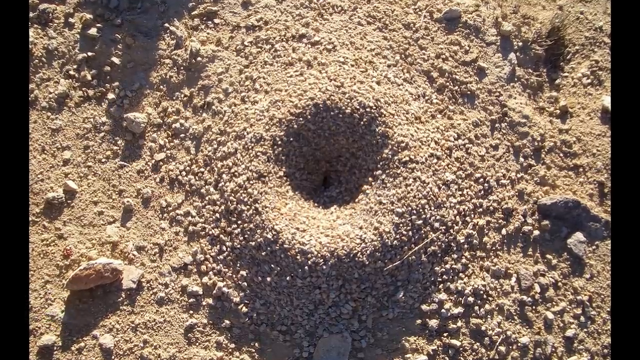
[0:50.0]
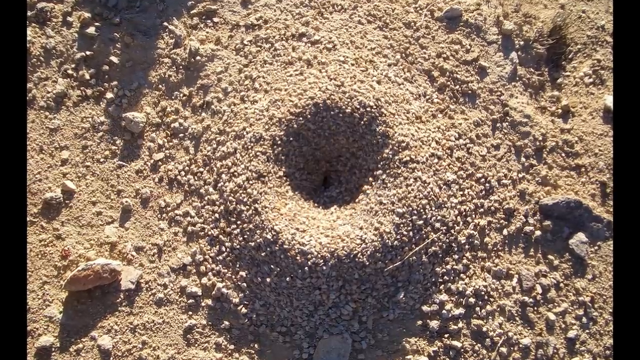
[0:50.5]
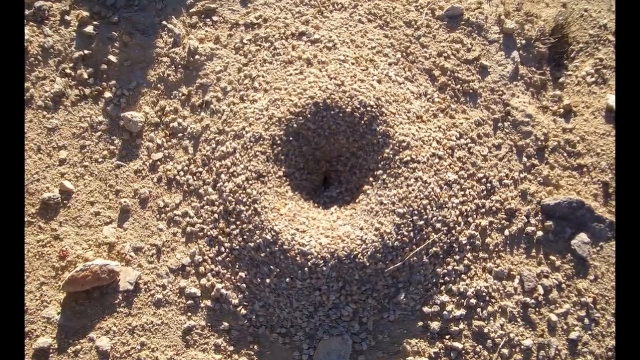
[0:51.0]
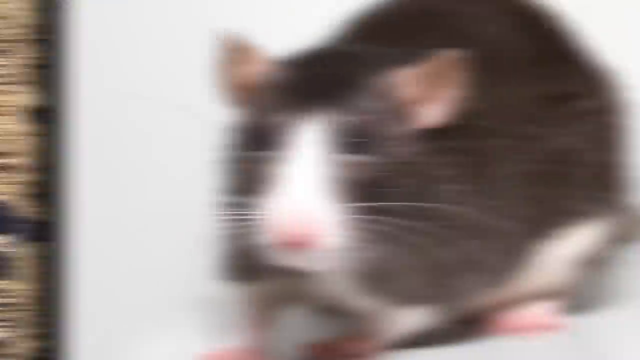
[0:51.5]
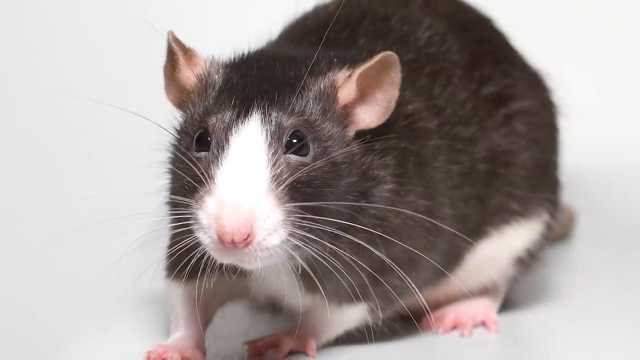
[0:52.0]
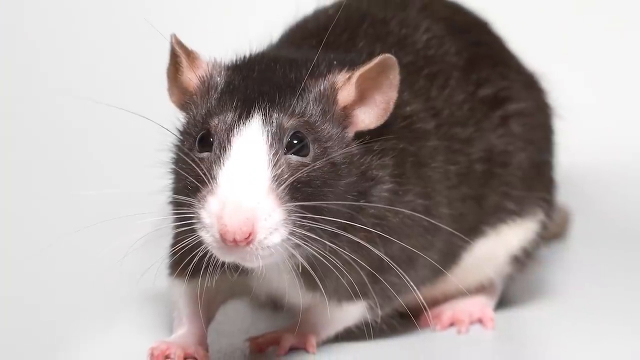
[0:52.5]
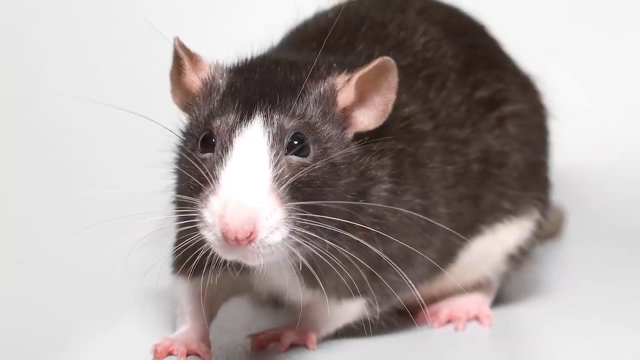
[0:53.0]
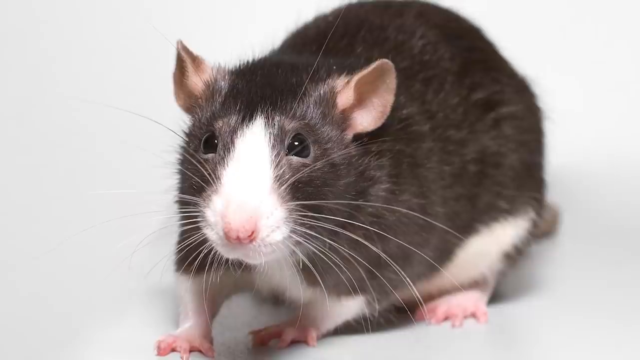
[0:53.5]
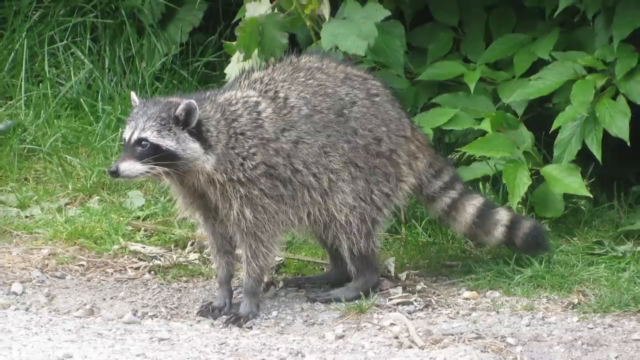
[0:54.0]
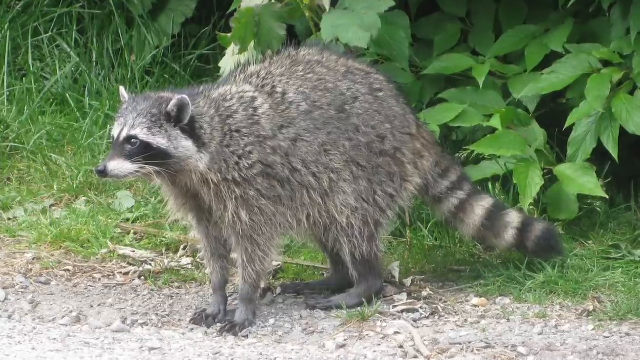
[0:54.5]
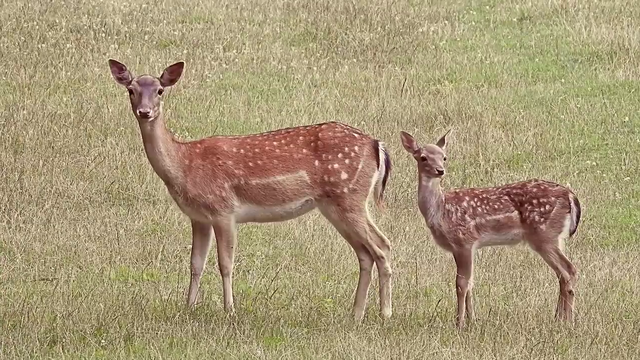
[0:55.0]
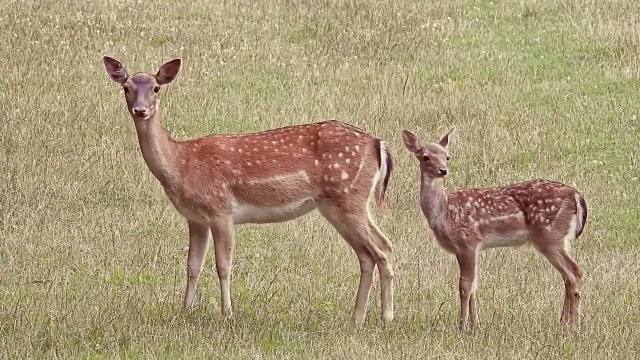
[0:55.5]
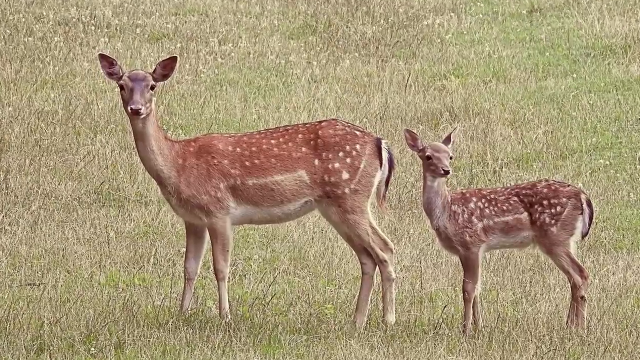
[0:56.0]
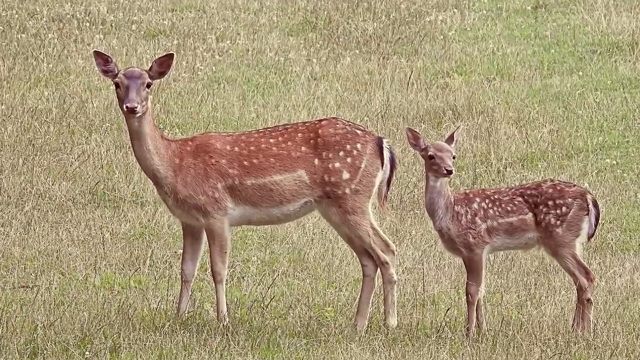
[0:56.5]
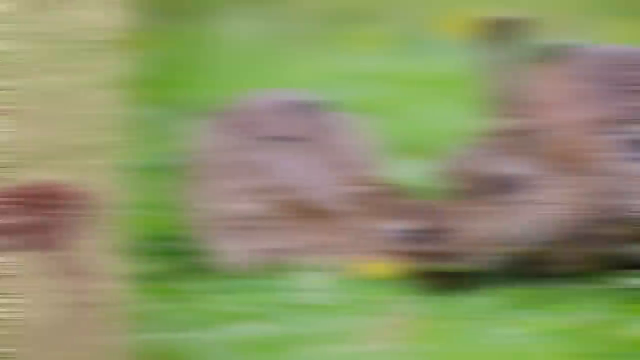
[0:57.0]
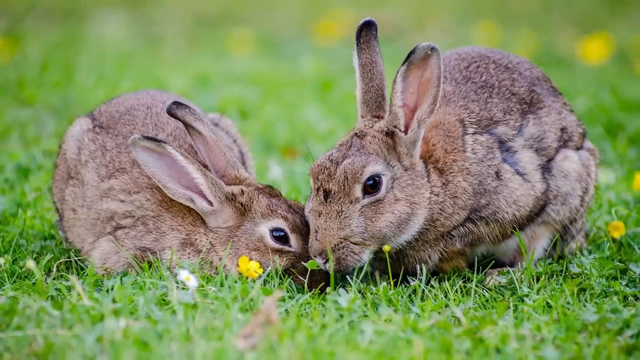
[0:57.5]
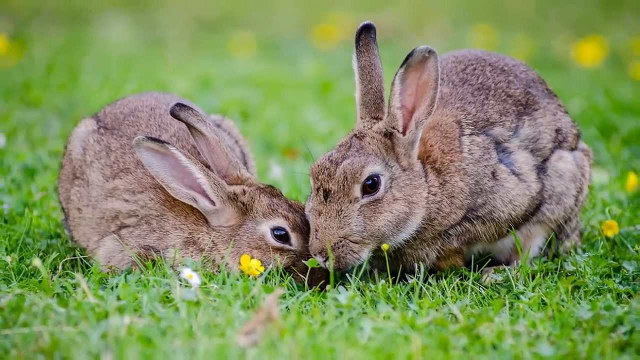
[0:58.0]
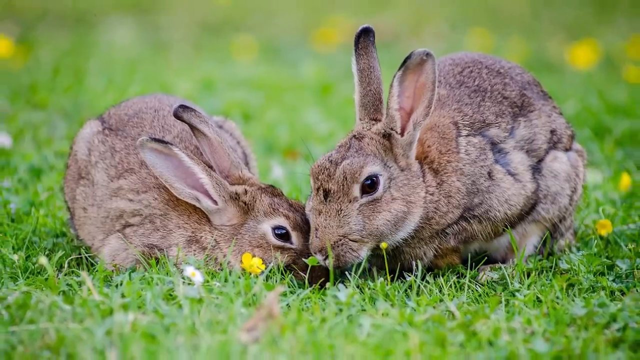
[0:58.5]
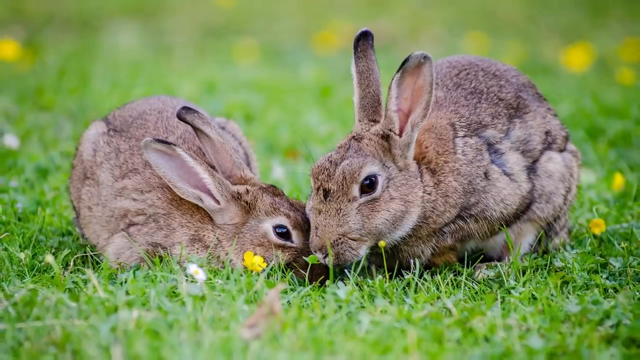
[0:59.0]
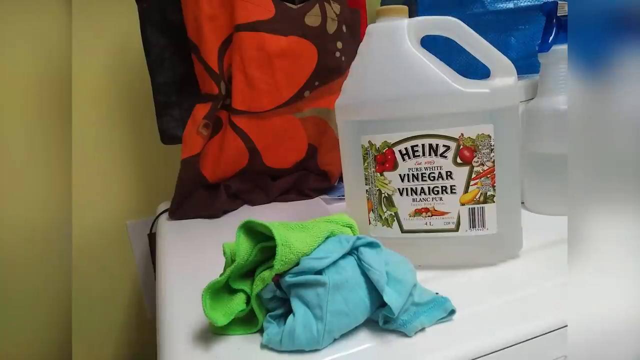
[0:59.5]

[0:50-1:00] The pile of sand with a hole at its center is shown, then the video quickly cuts to a rat or mouse. The mouse has dark fur with a white patch around the nose, pink ears, dark black eyes, and large white whiskers, and its hands and feet appear to be pink. It is looking at the camera. The shot quickly cuts to a raccoon standing on a street corner, with green bushes and green grass behind it. Next comes an image of two deer: one looks to be the mother, and behind it appears to be the young one. The deer are brown with white spots on their backs. The mother is looking at the camera, with dark black eyes. They look to be standing on a lawn of dark brown grass.